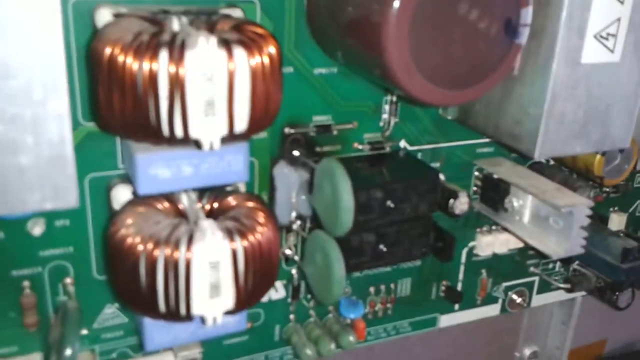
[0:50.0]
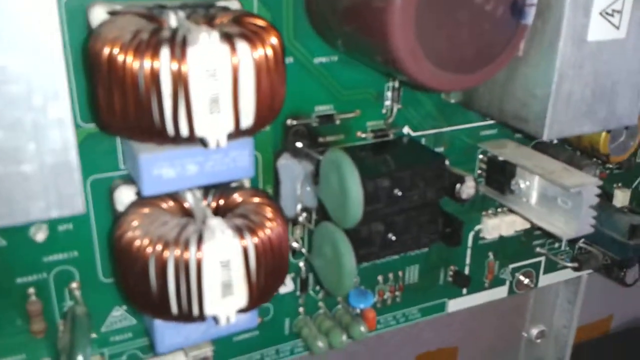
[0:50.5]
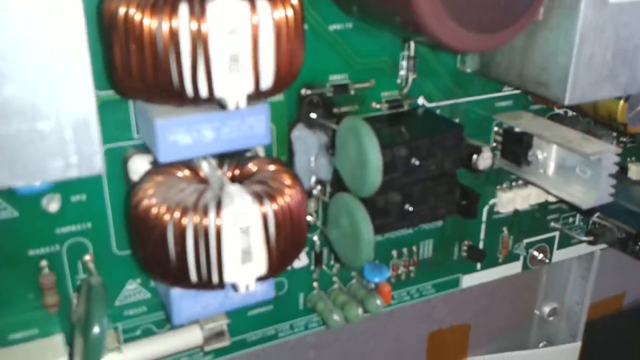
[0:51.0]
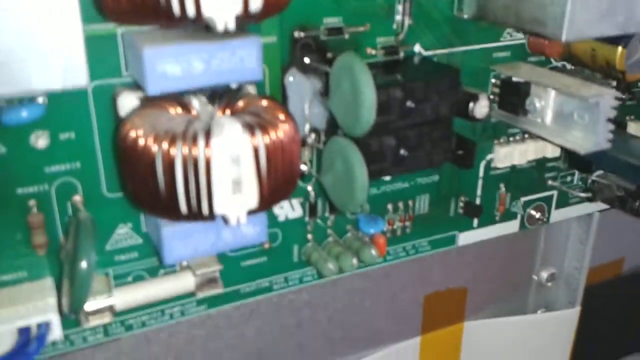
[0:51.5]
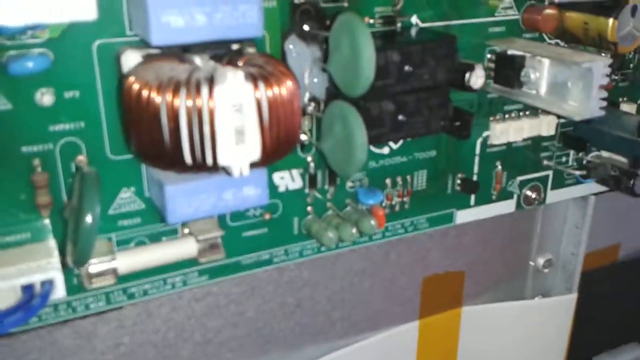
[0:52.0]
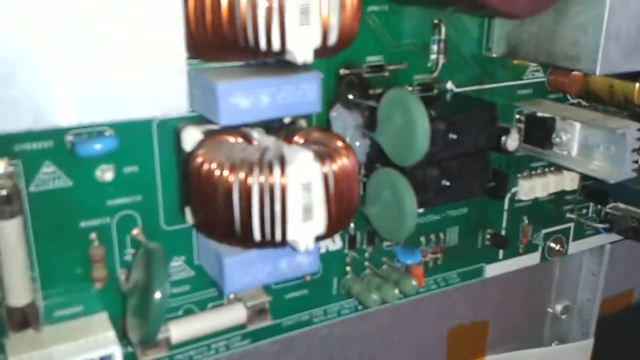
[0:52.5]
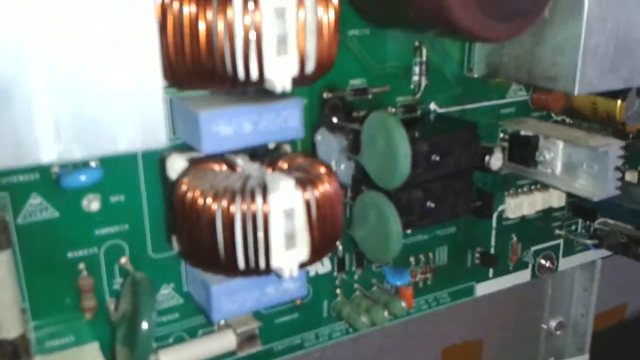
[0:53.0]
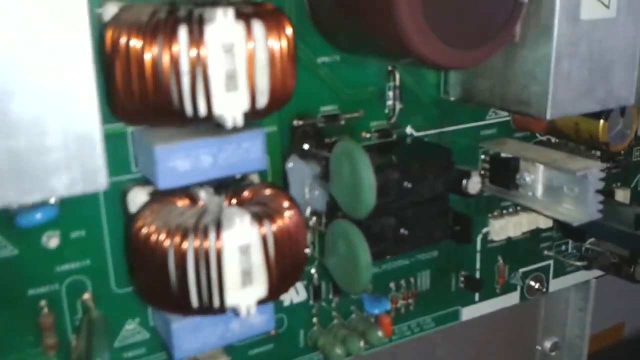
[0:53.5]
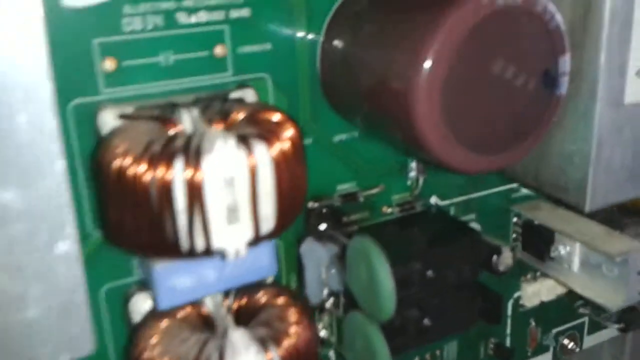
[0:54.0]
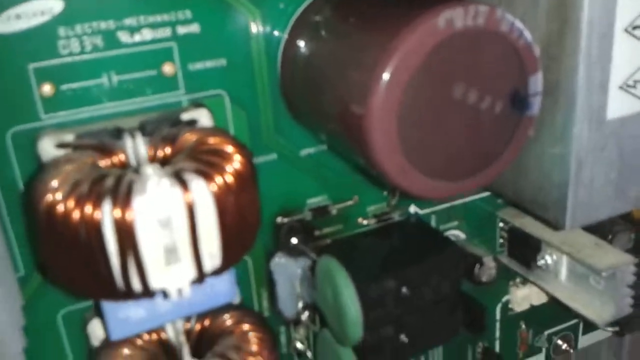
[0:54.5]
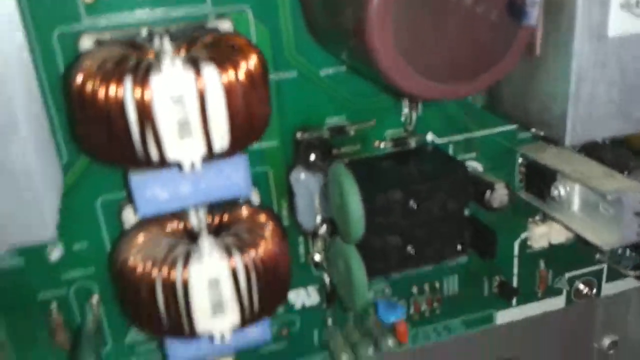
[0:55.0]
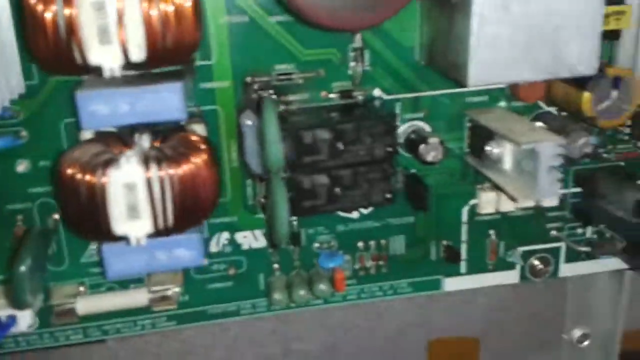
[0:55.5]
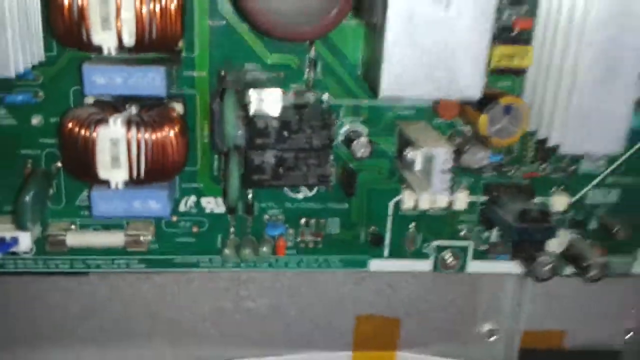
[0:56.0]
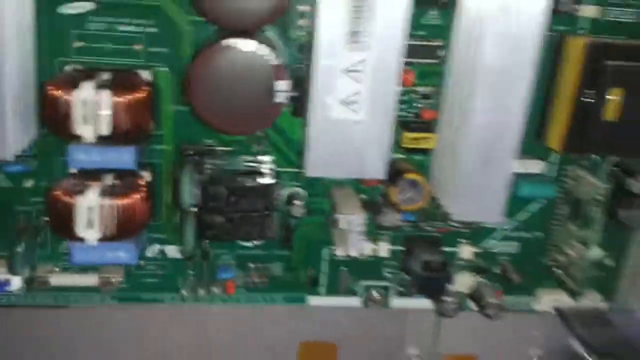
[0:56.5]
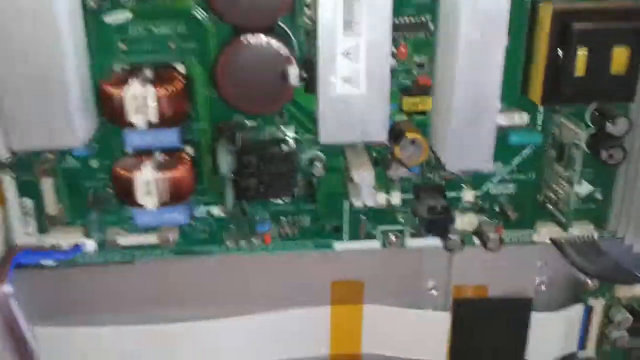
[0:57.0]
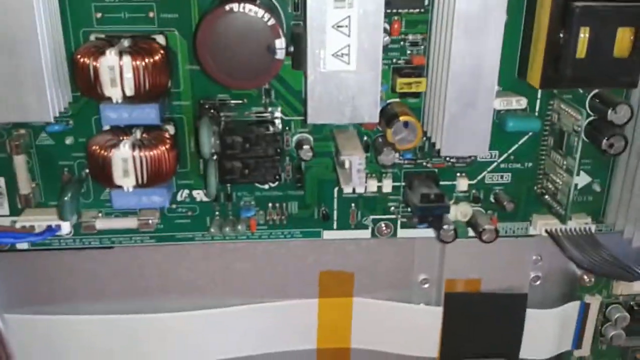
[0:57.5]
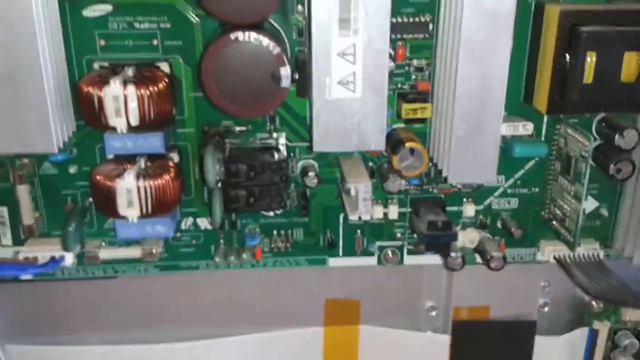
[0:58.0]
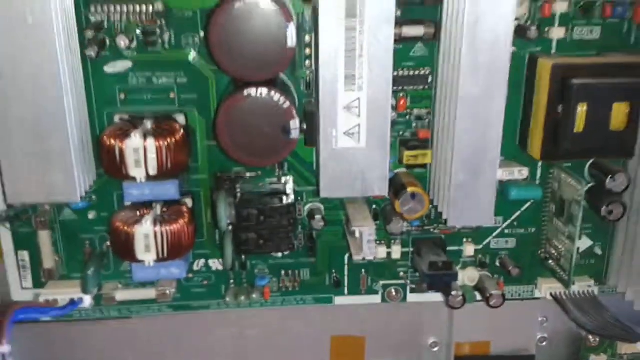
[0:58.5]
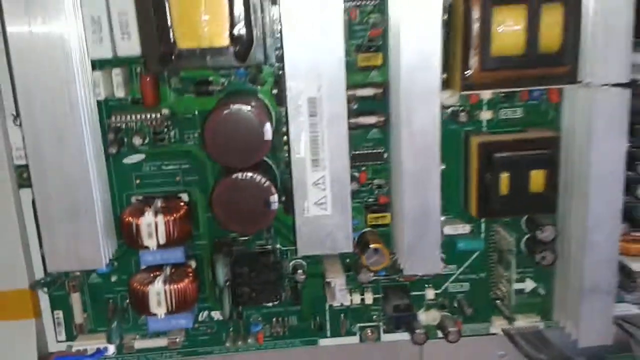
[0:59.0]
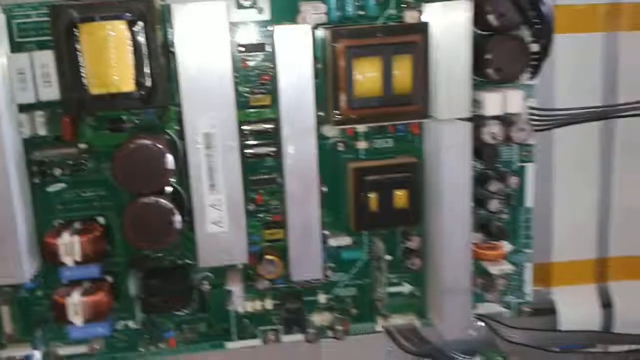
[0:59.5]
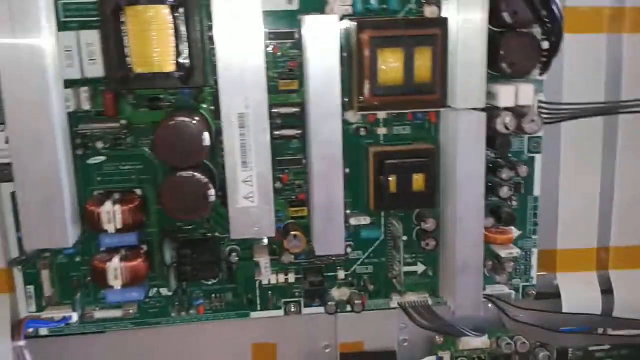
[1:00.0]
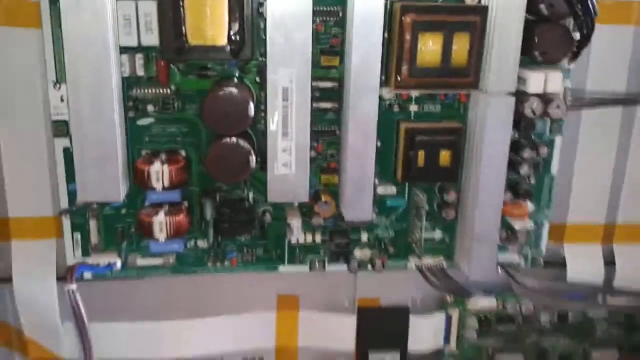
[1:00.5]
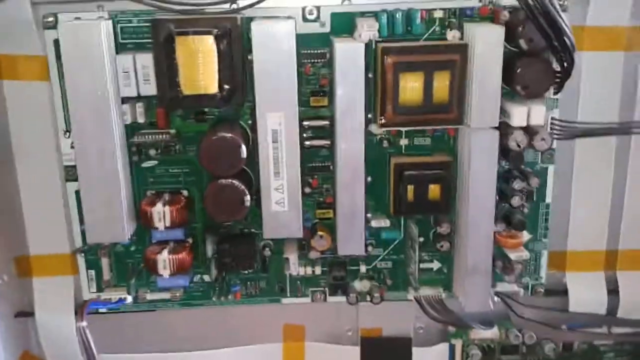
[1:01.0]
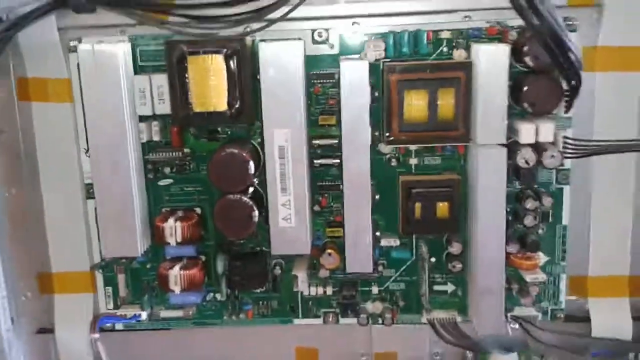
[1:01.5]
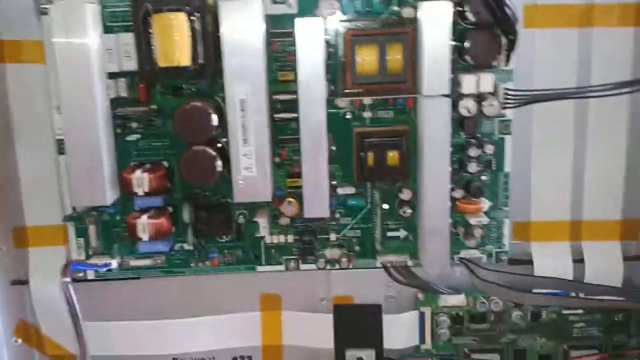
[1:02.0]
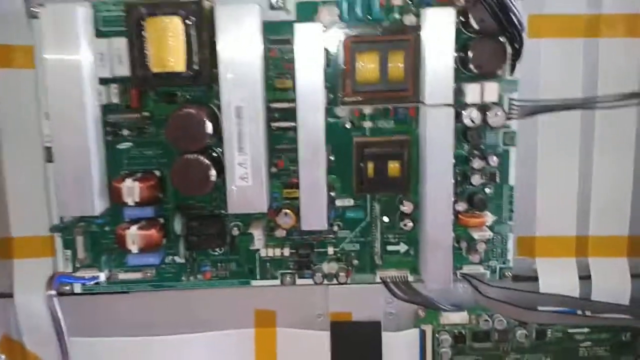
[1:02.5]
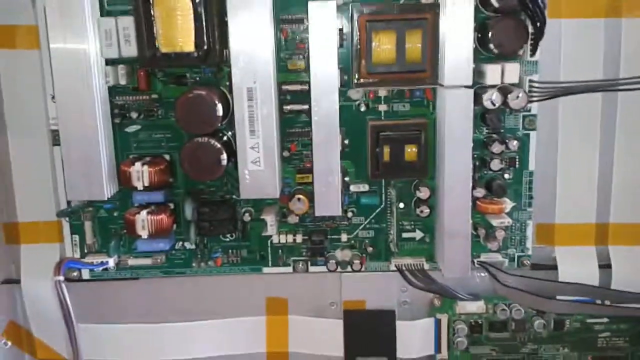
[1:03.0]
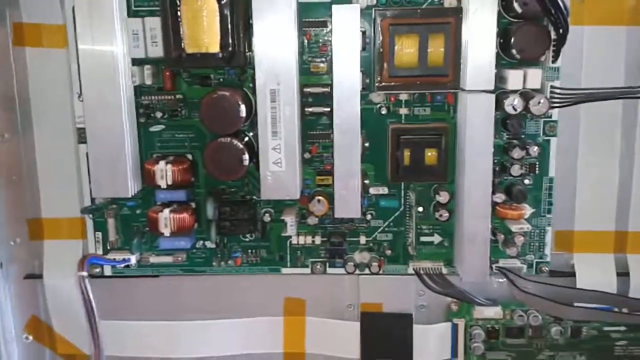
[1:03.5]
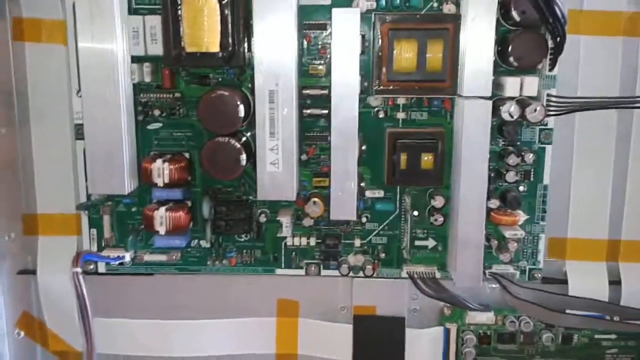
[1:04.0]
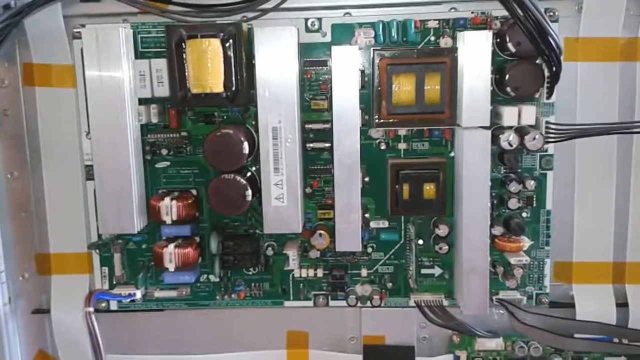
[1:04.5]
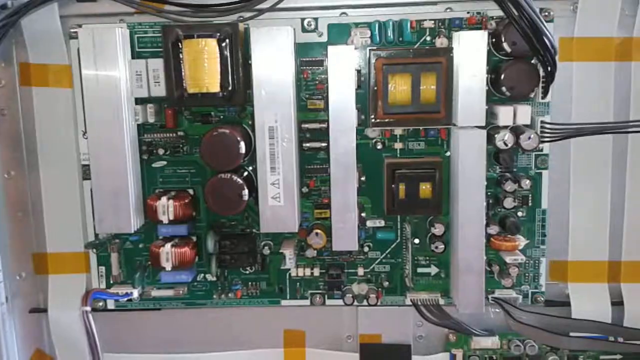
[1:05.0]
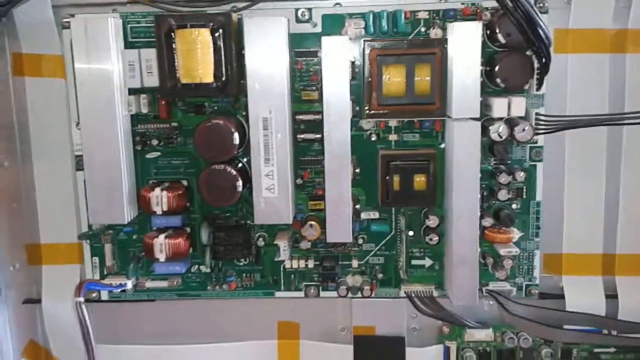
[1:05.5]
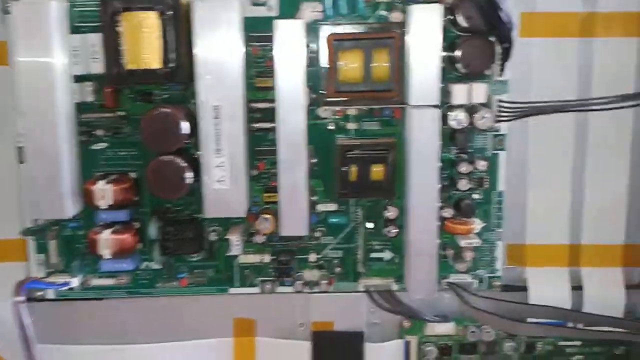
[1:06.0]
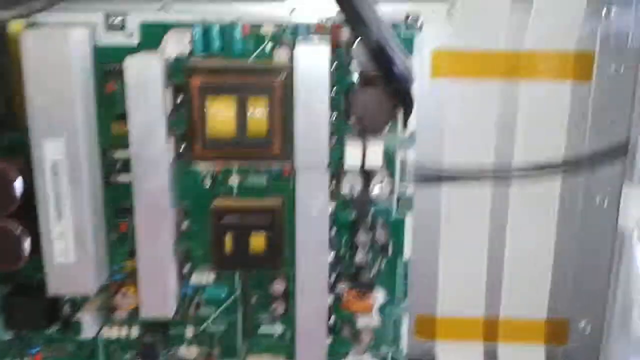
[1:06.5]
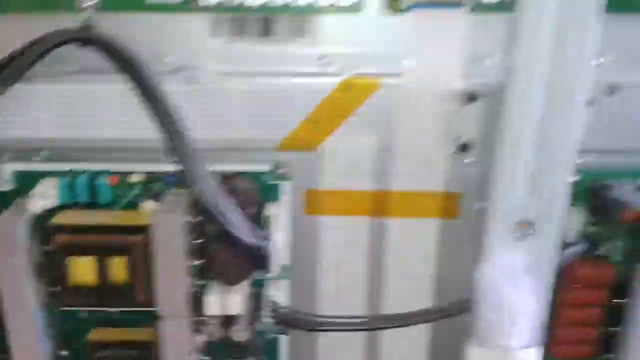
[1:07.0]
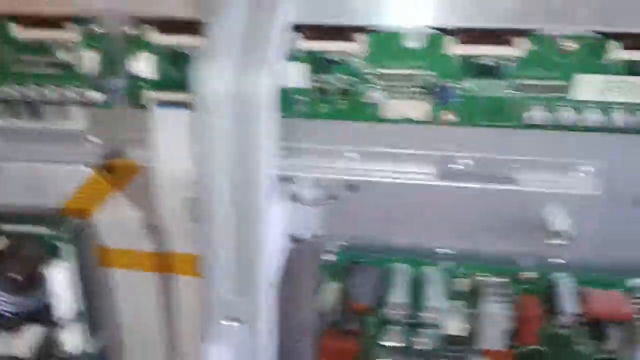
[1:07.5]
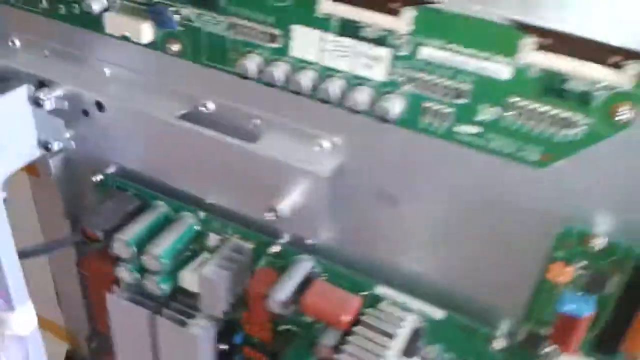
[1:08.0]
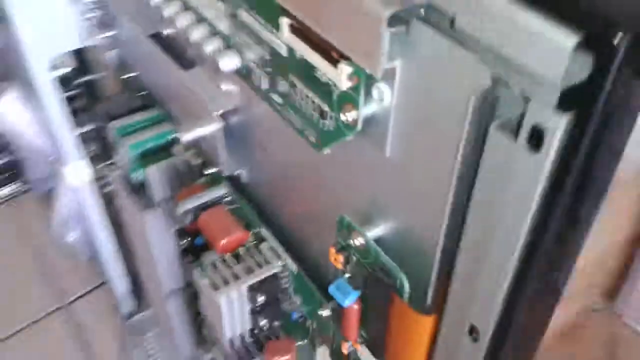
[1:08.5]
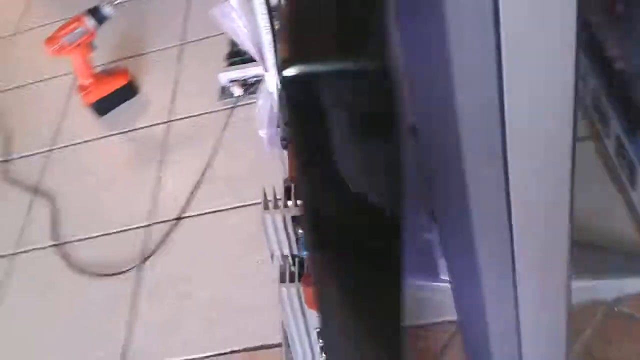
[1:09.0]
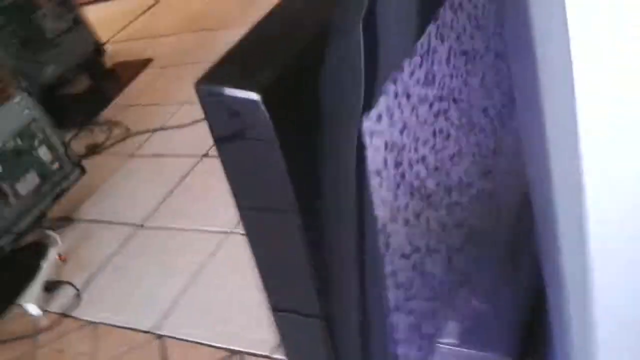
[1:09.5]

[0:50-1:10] The shot starts with a close-up of two round white inductors wrapped with copper coil. Below one inductor is a blue capacitor or resistor, below that another inductor wrapped in copper, and below that another transistor on the circuit board. He zooms in straight to the inductors, then zooms out to show different colored chips, capacitors, a few diodes, an integrated circuit, and two black relay switches with yellow on the front. He zooms back further, showing wires running along the top of the circuit board; they are connected to the top right corner of the board, pulled up and held by clips above it, and go over to the other side.